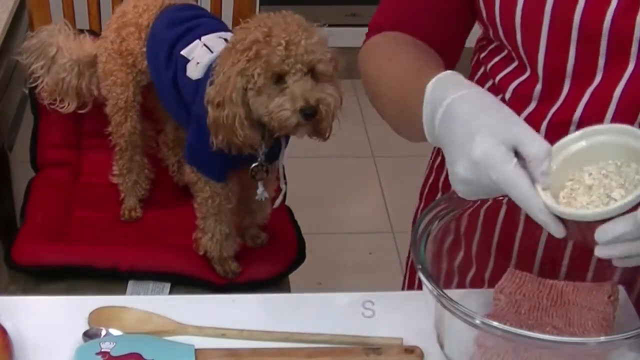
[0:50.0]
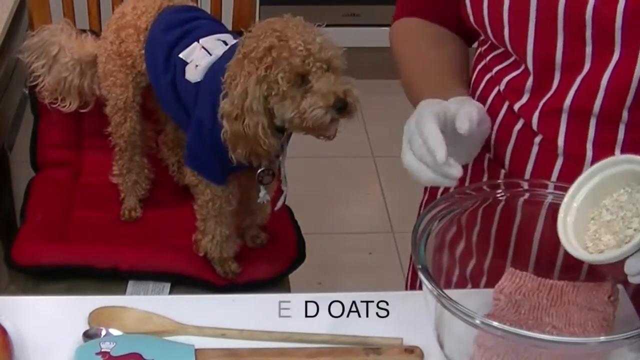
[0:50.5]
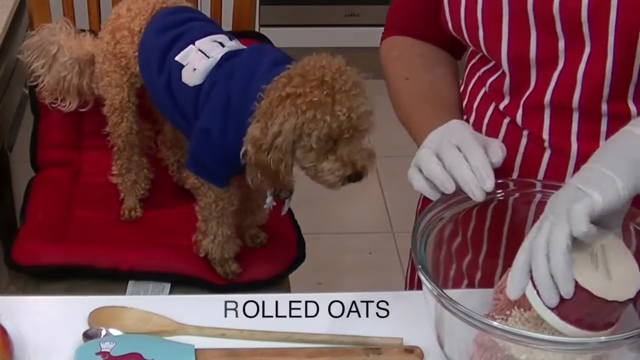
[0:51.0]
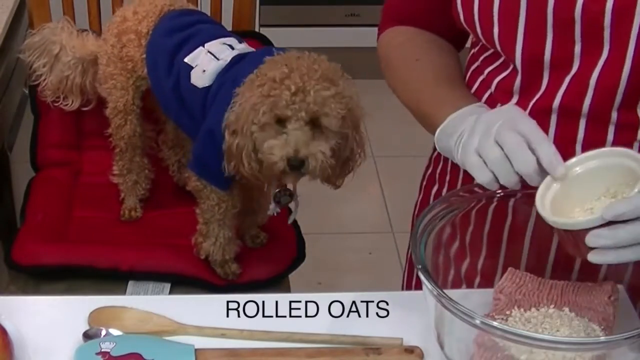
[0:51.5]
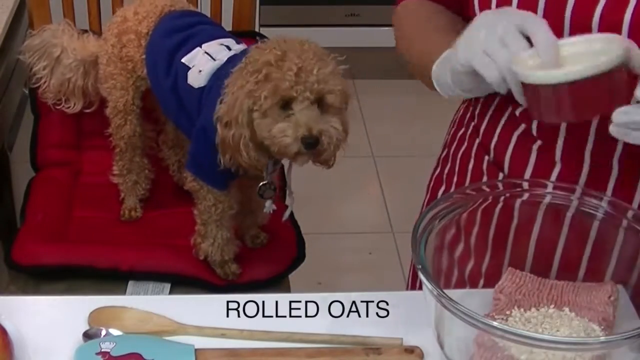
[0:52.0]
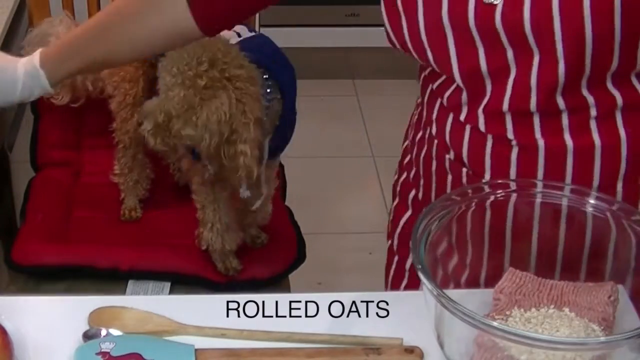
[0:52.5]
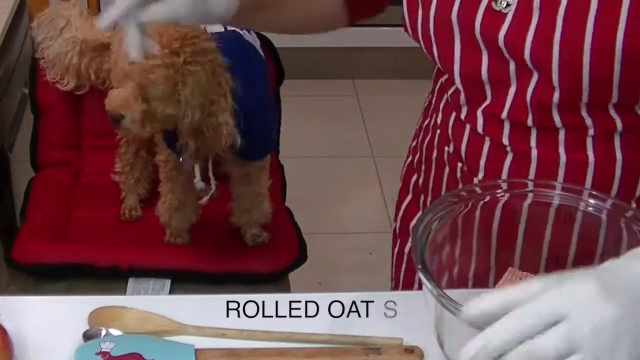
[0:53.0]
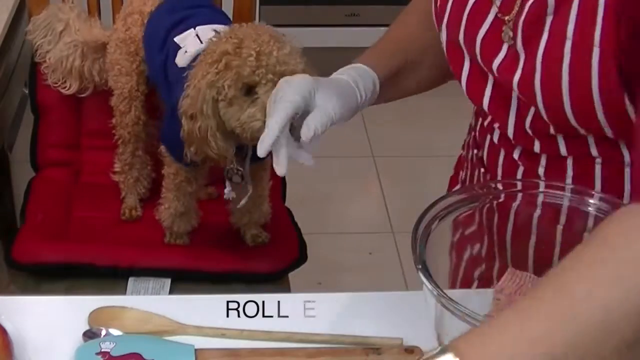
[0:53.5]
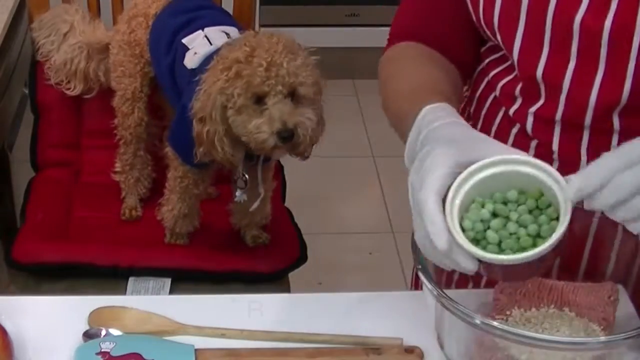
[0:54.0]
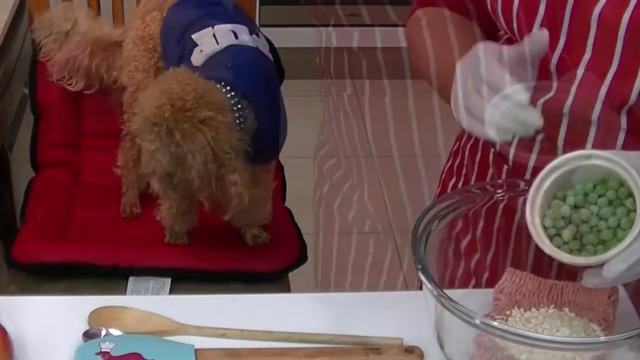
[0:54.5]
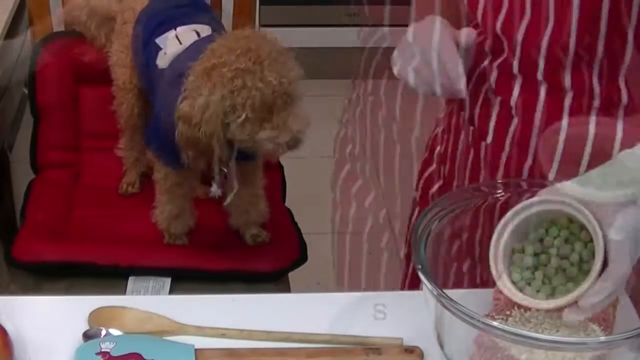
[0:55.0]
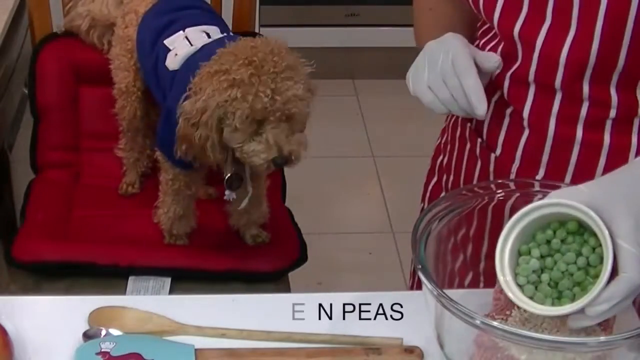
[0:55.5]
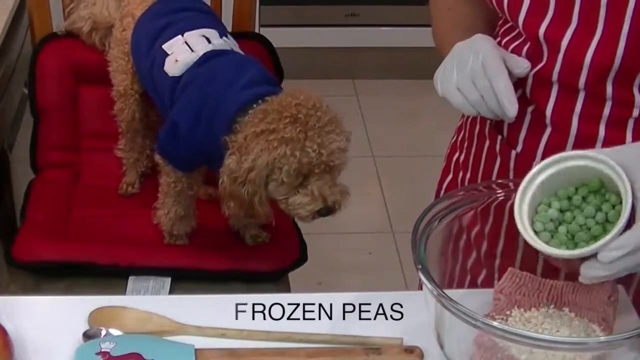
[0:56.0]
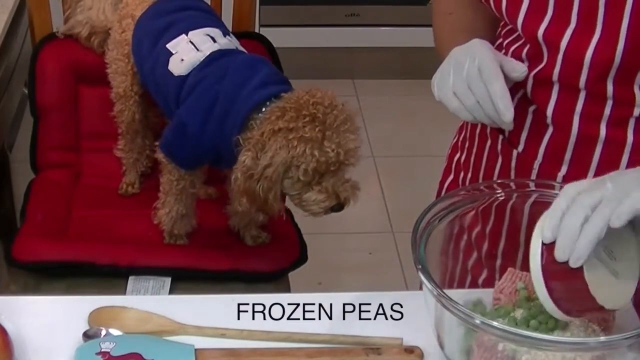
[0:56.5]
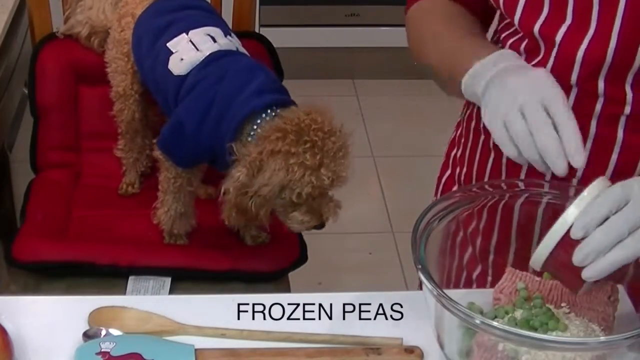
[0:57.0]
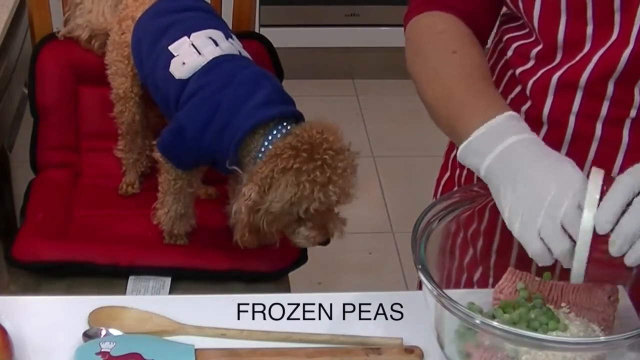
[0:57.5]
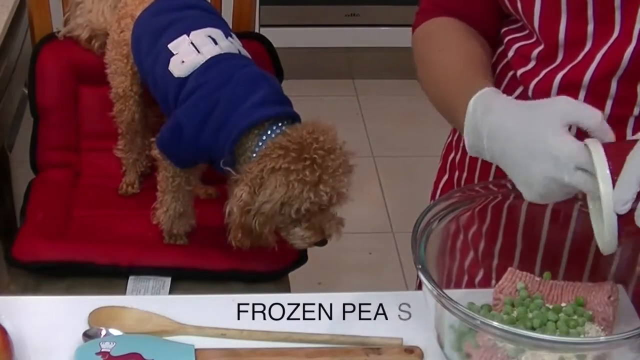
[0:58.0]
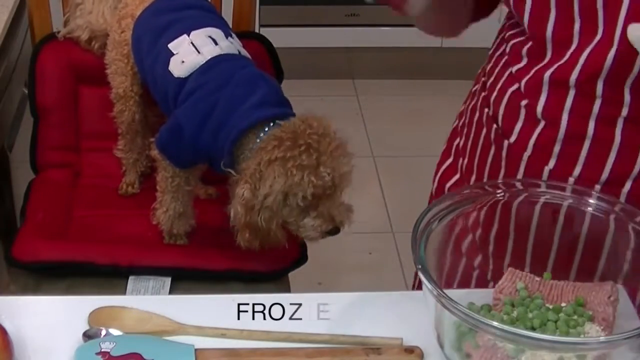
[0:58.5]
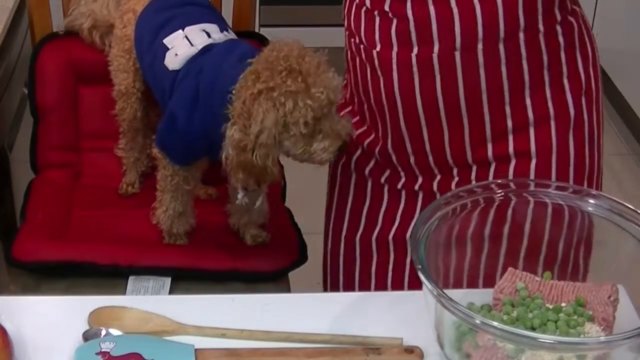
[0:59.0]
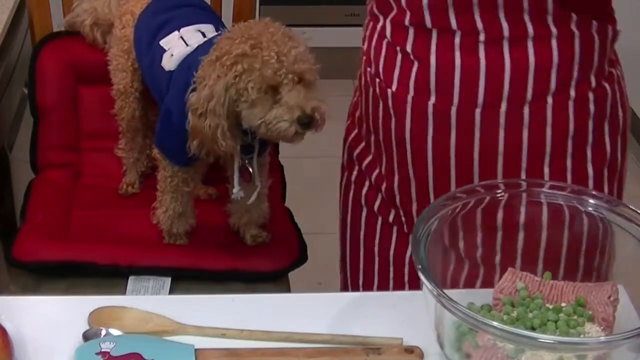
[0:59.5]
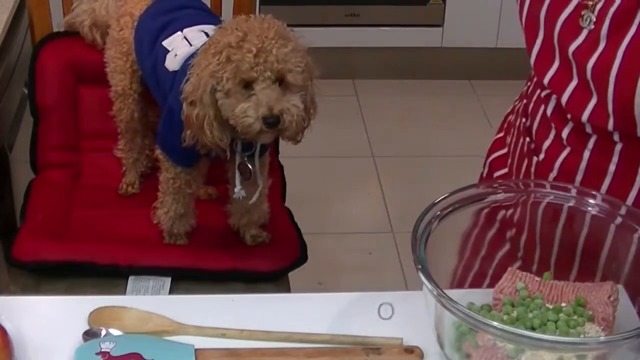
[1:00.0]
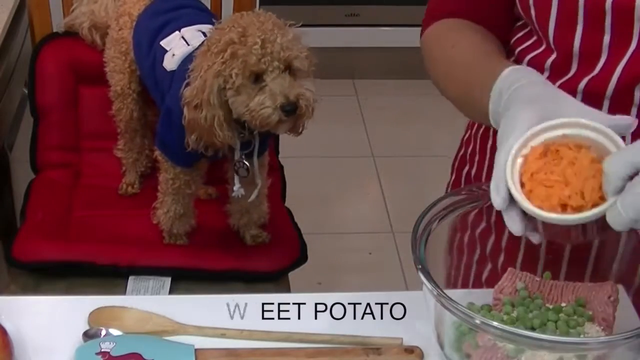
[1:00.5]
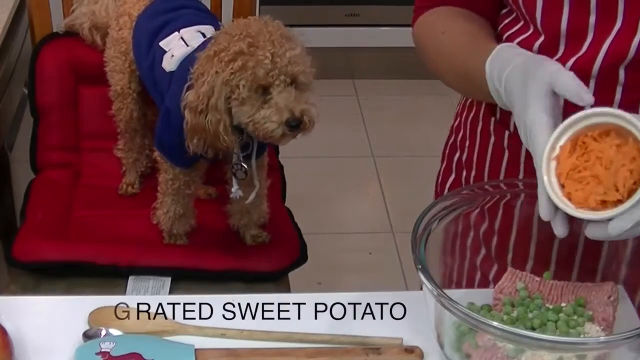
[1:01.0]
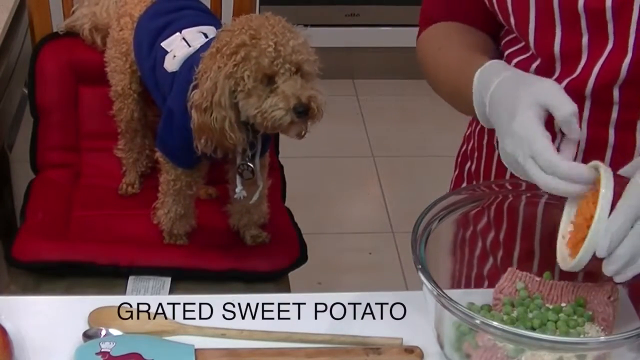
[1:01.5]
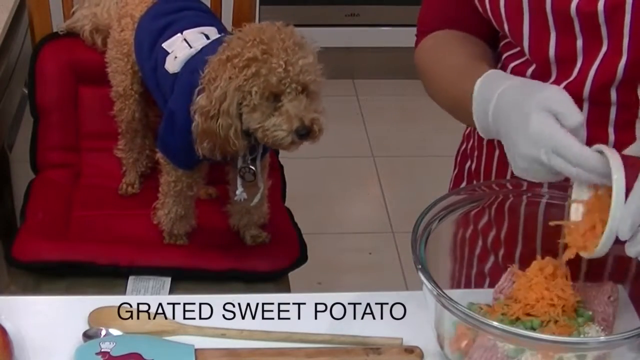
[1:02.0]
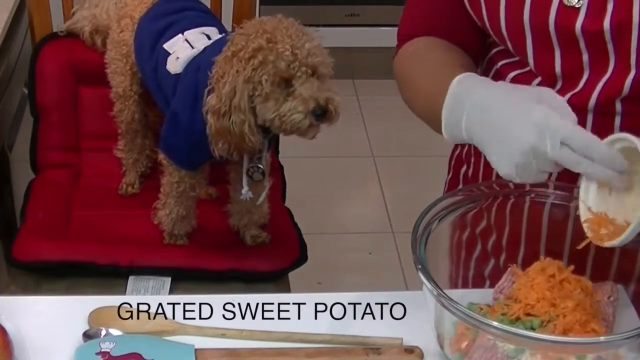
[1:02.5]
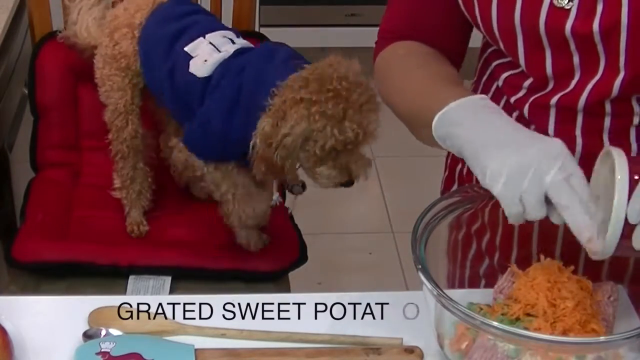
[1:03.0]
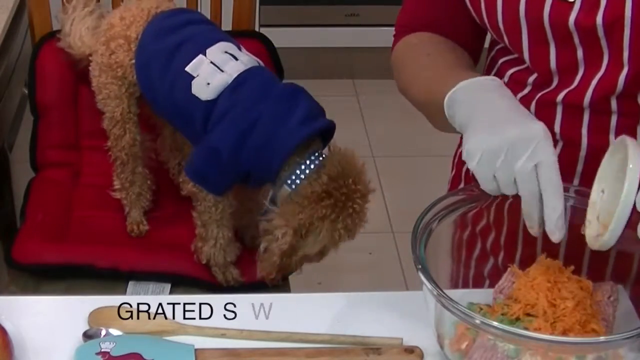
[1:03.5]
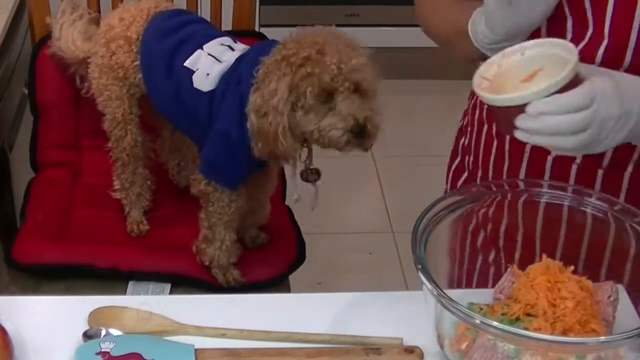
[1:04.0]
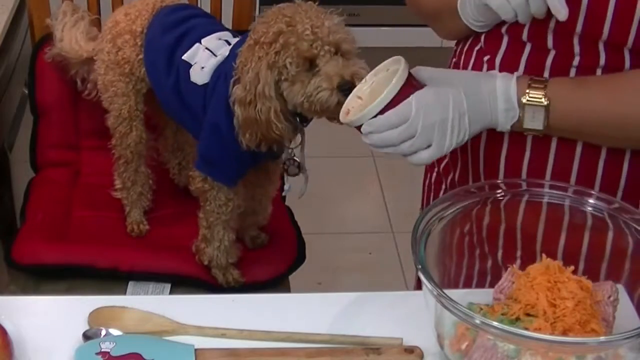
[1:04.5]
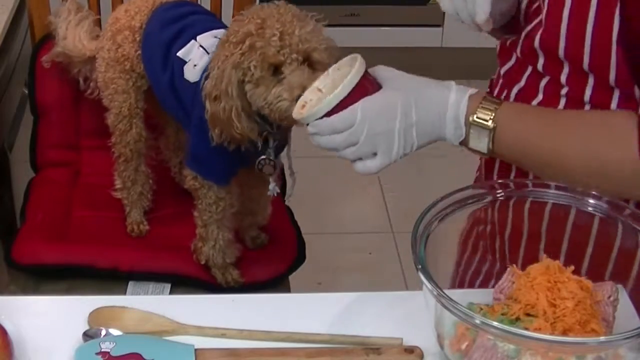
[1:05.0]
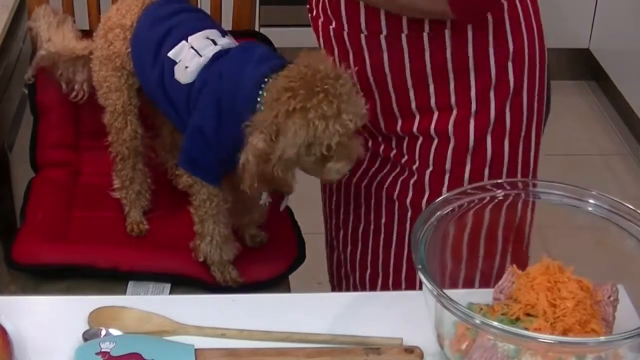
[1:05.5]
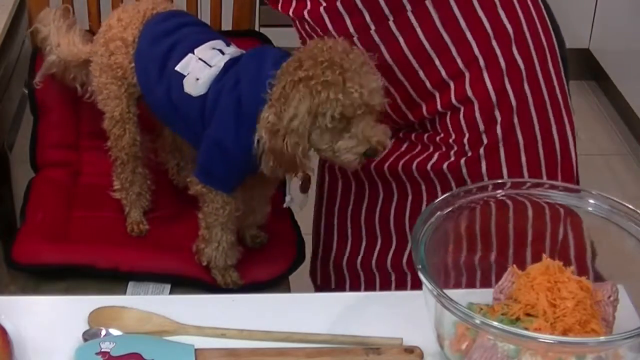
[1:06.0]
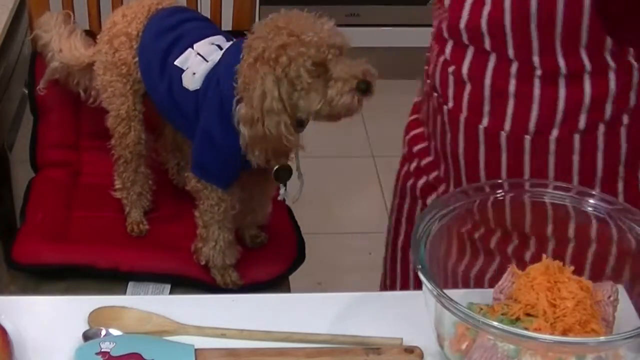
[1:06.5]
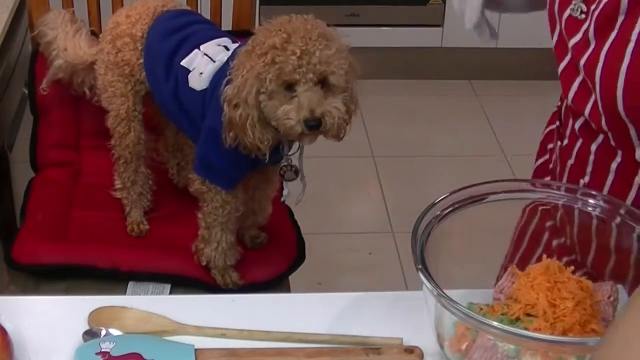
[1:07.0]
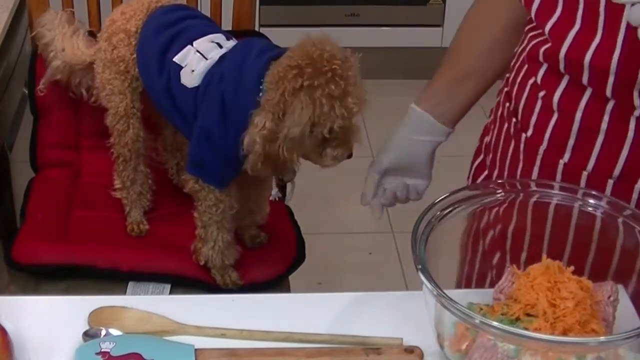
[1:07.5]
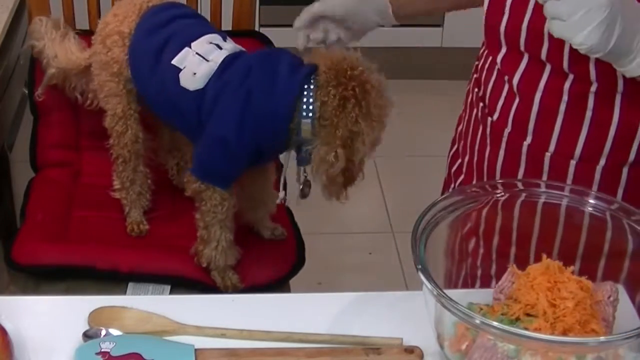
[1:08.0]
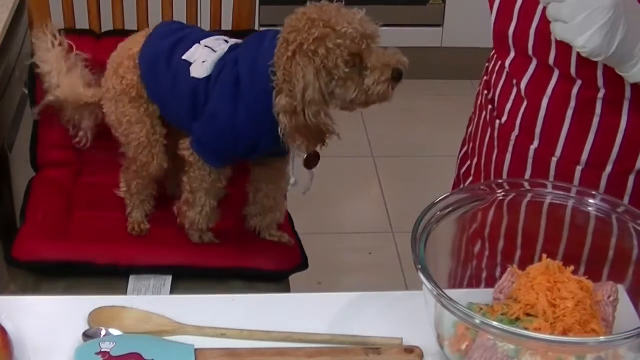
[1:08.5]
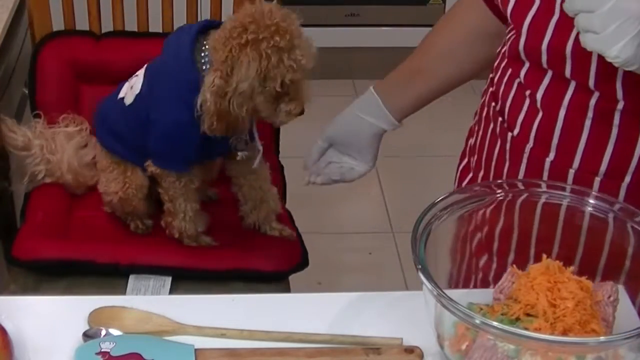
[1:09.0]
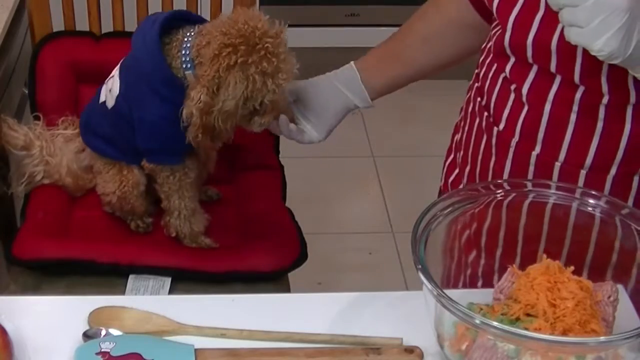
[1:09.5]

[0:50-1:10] A brown dog wearing a blue sweater with white writing on it sits on a red cushion placed on a brown chair. Next to the dog is a lady, of whom only the bottom half and her hands are visible, over a glass bowl with mince in it. She pours what looks to be rolled oats into the bowl, then some frozen peas, then some grated sweet potato. Throughout this, the dog next to her looks to be very interested, and she occasionally puts some of the ingredients under the dog's nose, and it sniffs them. She then puts her hand out and the dog puts its paw up into her hand.